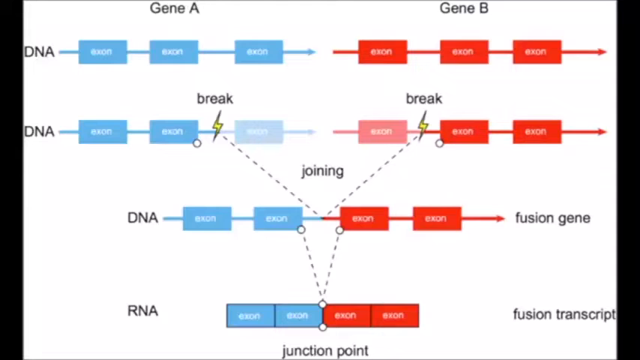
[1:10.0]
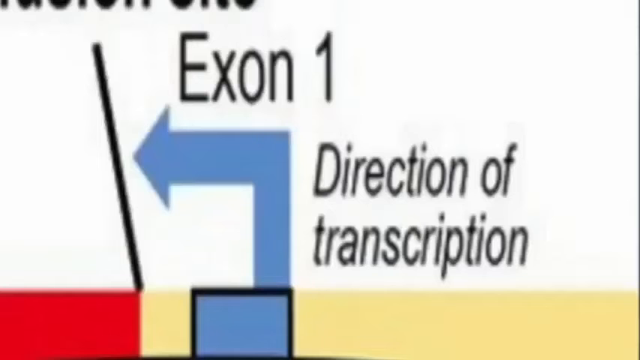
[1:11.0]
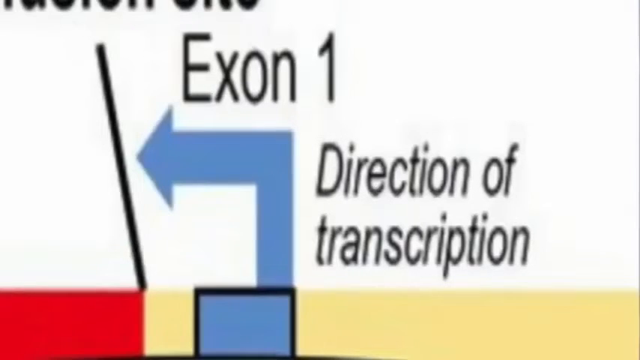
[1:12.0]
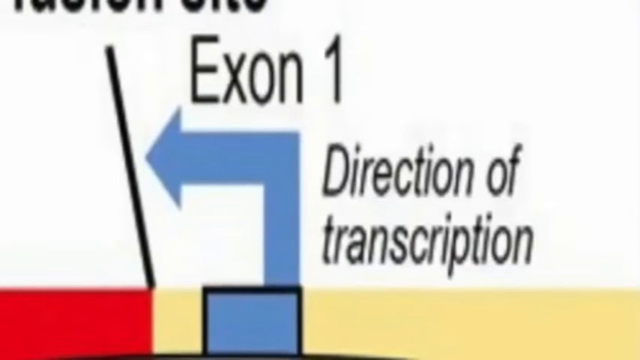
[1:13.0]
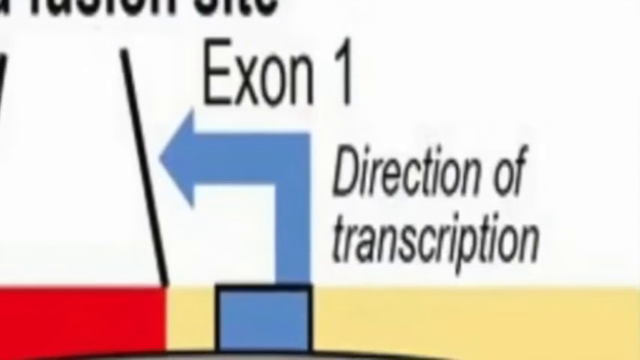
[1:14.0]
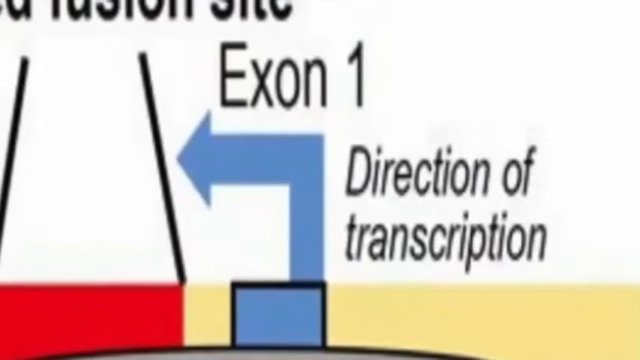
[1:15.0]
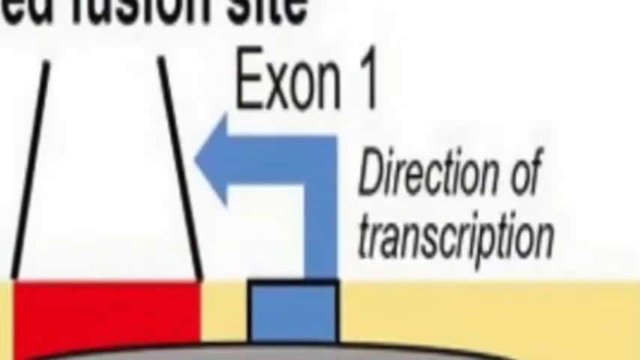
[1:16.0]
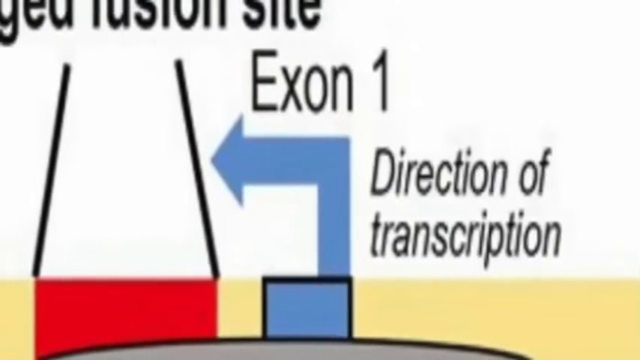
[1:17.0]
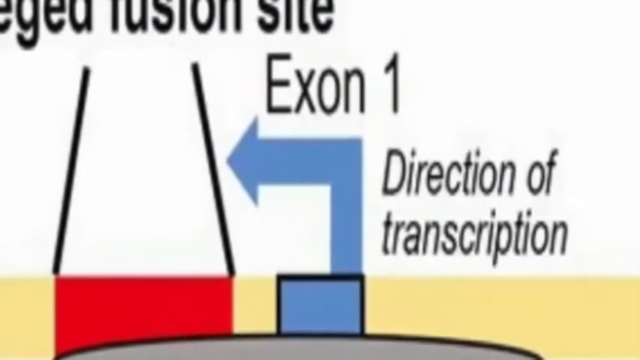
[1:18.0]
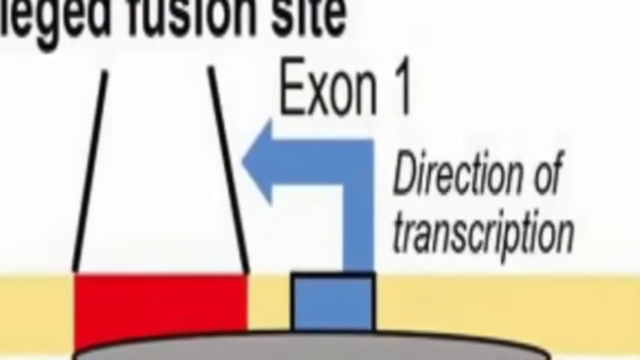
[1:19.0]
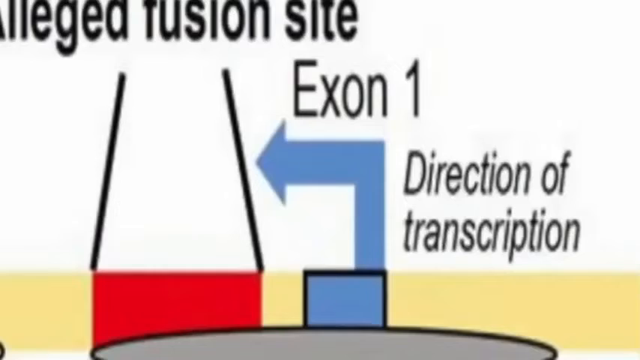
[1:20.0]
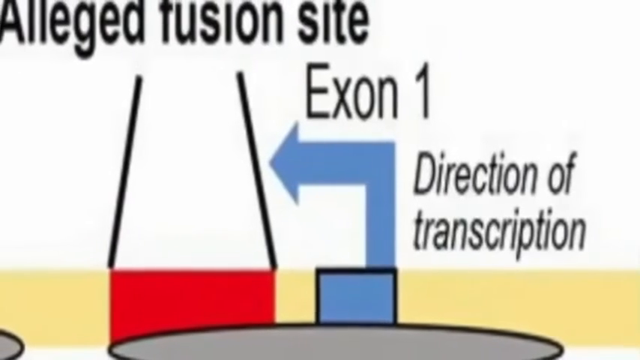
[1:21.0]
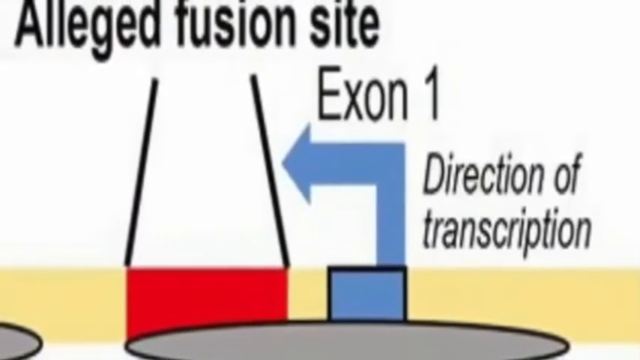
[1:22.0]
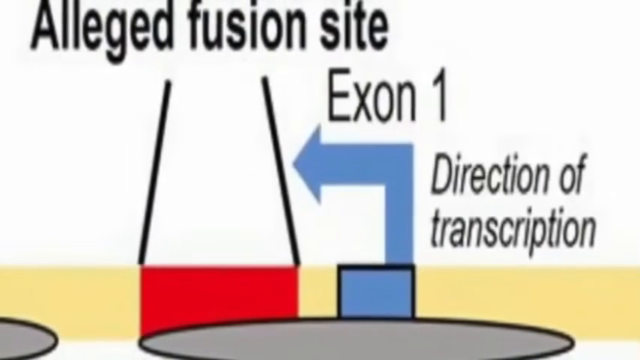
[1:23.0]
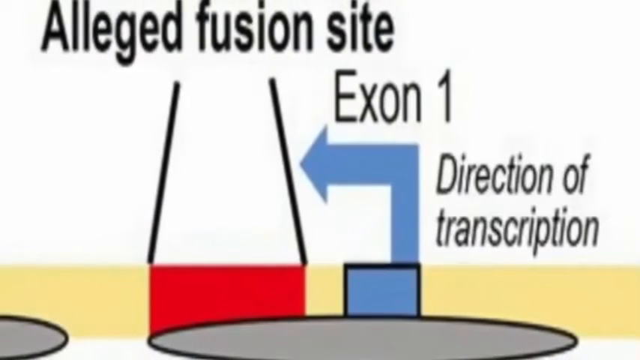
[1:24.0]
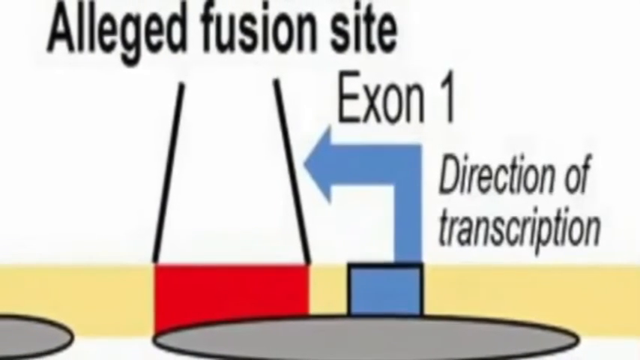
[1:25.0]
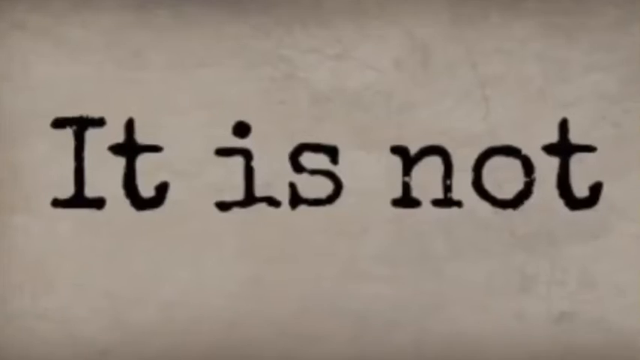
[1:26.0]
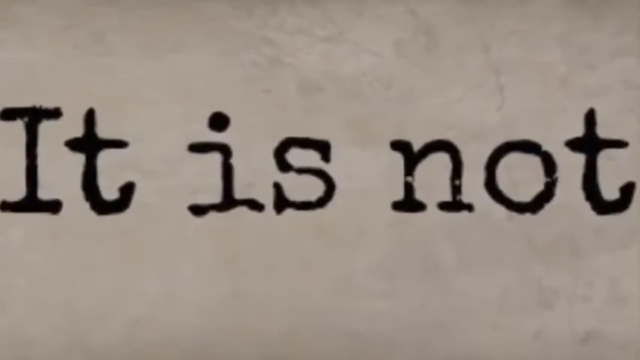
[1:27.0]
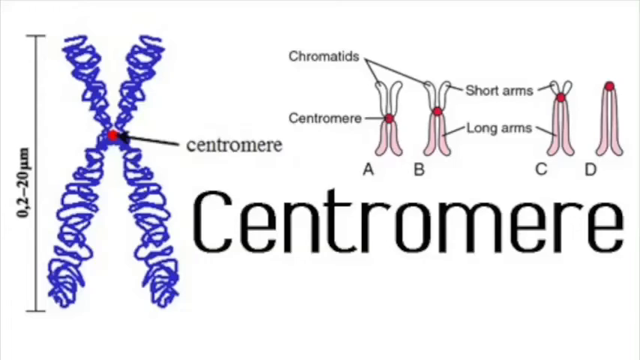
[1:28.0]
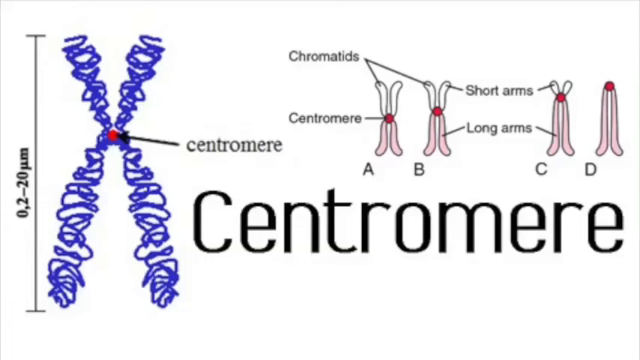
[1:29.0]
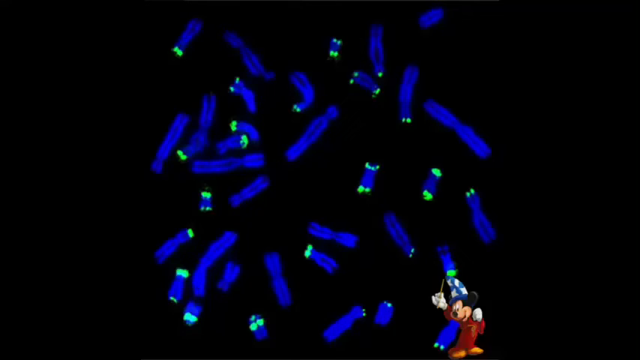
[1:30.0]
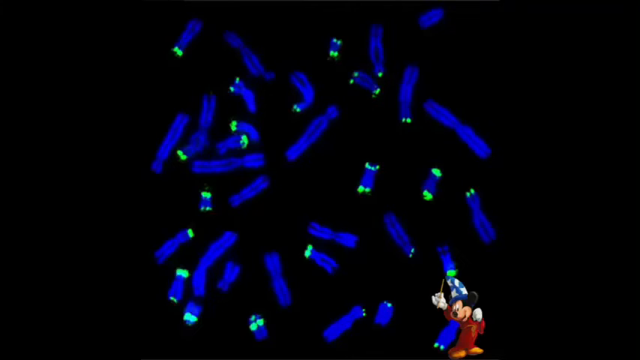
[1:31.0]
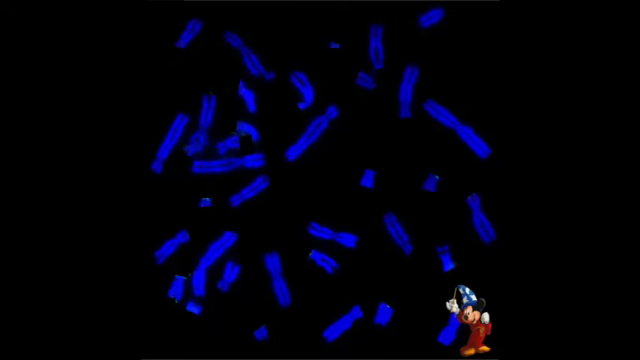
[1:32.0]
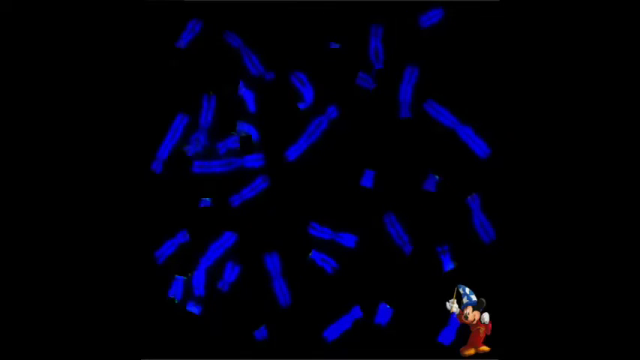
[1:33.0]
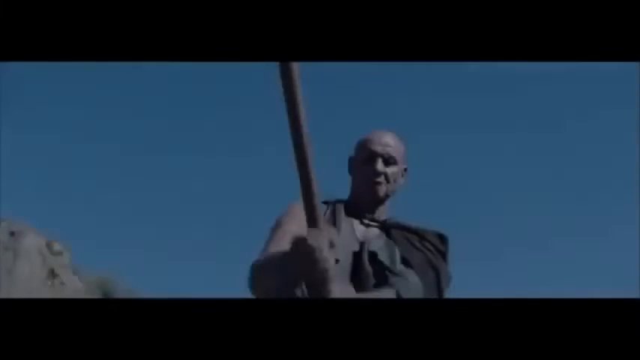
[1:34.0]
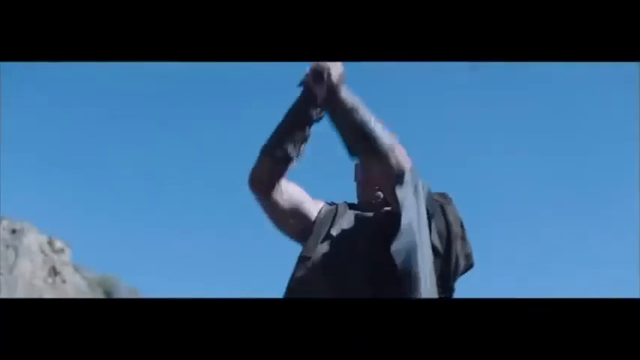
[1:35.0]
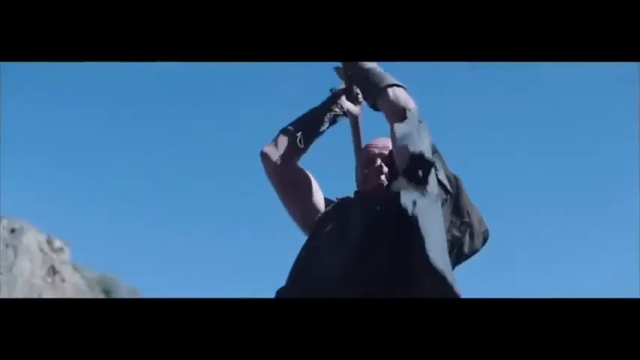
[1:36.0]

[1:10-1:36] On a white background, the left side is in blue and the right side in red. At the top of the left side it says "gene A," and all the way to the left it says "DNA." A blue line leads from it to a blue rectangle labeled "exon," then another blue line and blue rectangle labeled "exon," then another slightly larger blue line and a blue rectangle labeled "exon," followed by an arrow pointing to the right. Underneath is another DNA line with the first two exons, but the third is faded out, and a dotted line goes to the center of the next DNA line down. Beneath that is DNA followed by exon, exon. At the bottom is RNA, showing two blue exons next to two red exons, with a dotted line from their center up to the blue exon rectangle on the left and a red one on the right. Everything on the left under gene A is mirrored over to gene B on the right, in red. On the second line, where the first dotted line is, both the left and right are labeled "break" with a lightning bolt. In the middle, above where the lines meet on the third row, it says "joining." On the third line down, all the way to the right where the red arrow points right, it says "fusion gene," and in the bottom right corner it says "fusion transcript." Next, a page zoomed in on "exon one direction of transcript" pans to the left. Then black text on a white page reads "it is not." A new page follows with an off-white, slightly yellow background and "Centromere" in big black letters in the center. On the left is an X of blue squiggles with a red dot in the middle, labeled "centromere." On the right are four more of those figures, outlined in gray and filled with white on the top and pink on the bottom, each with a red circle: in the first it is in the middle, in the second above the middle, in the third almost to the top, and in the fourth all the way at the top. They are labeled A, B, C and D. The top parts are labeled "chromatids," the middle circle "centromere," and figures A, B and C are labeled with "short arms" on the top and "long arms" on the bottom. After that, a page shows Mickey Mouse at the bottom toward the right and a bunch of those X's in fluorescent blue floating on a black background. Finally, a man with a bald head, a big black wrist covering and some kind of cape or sash raises a wooden-handled device over his right shoulder.